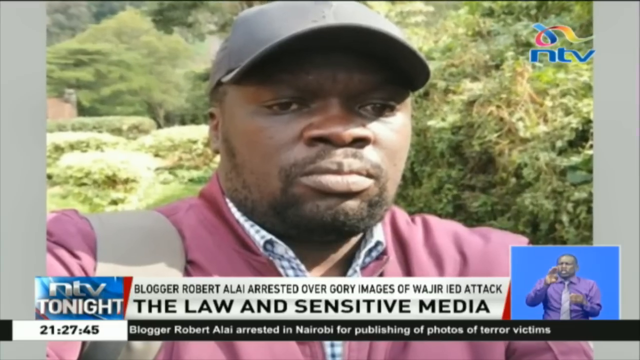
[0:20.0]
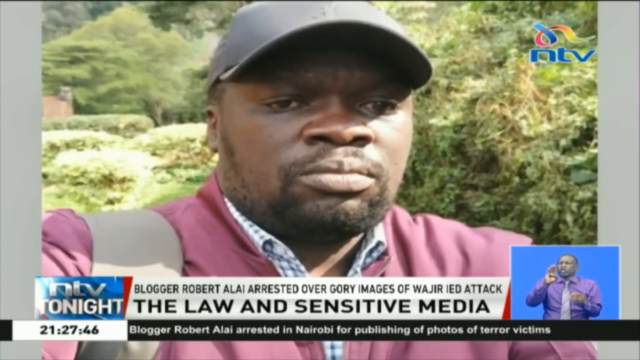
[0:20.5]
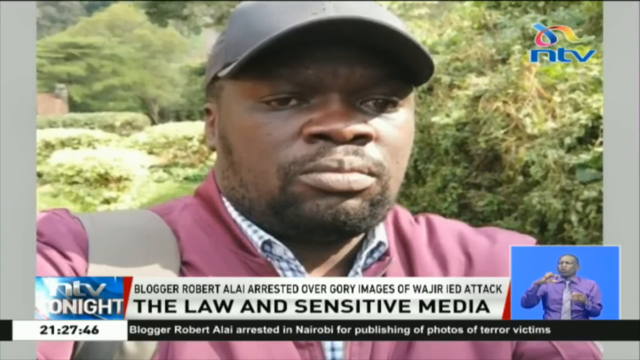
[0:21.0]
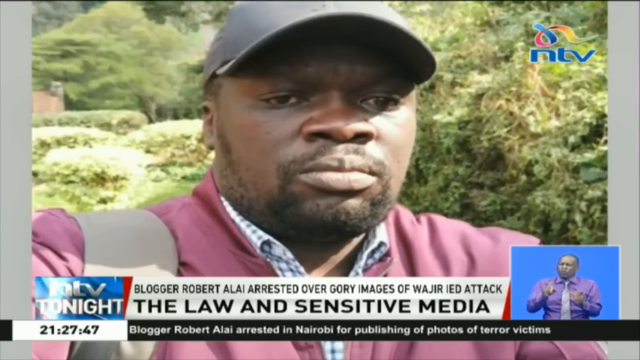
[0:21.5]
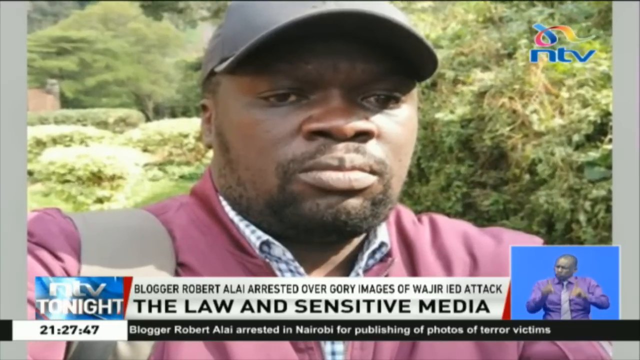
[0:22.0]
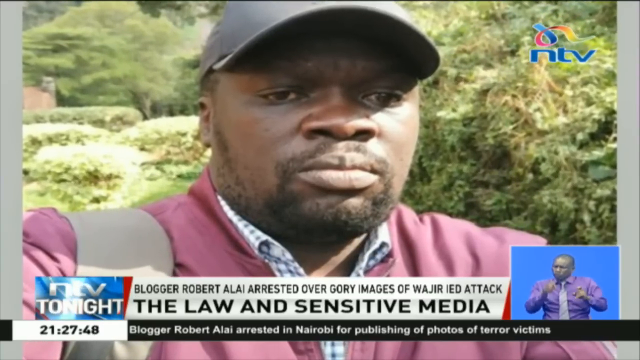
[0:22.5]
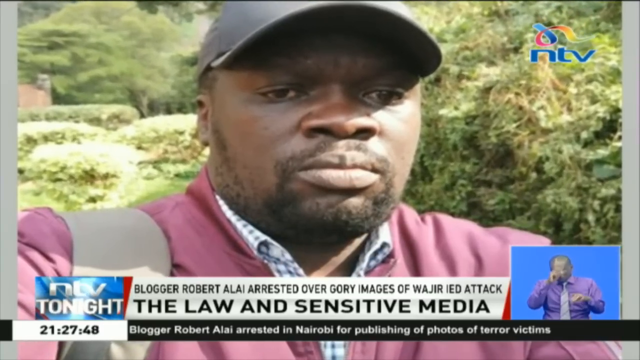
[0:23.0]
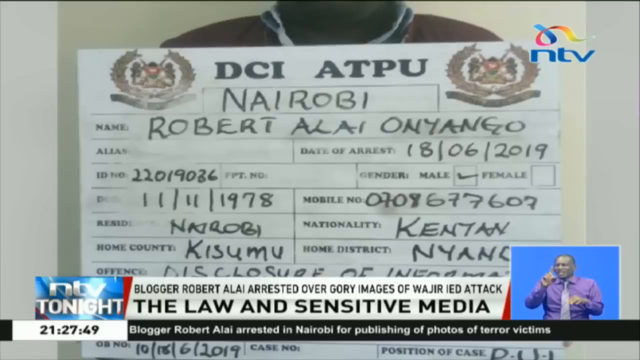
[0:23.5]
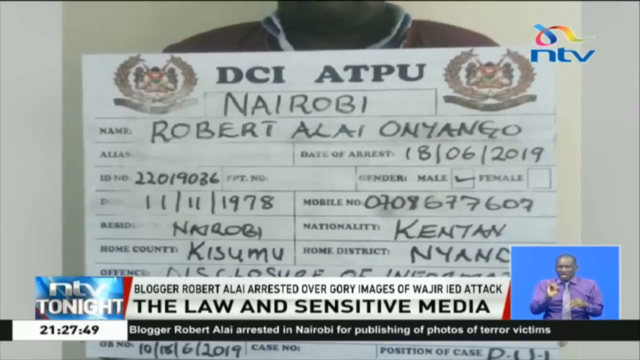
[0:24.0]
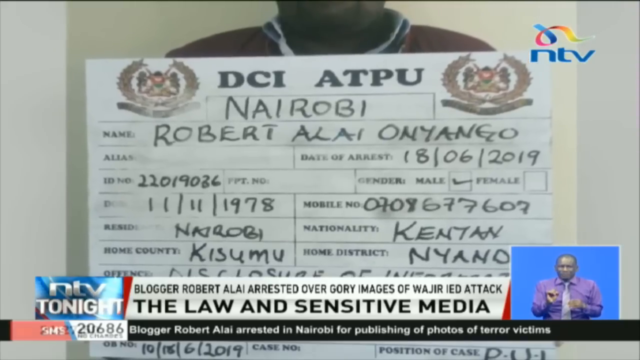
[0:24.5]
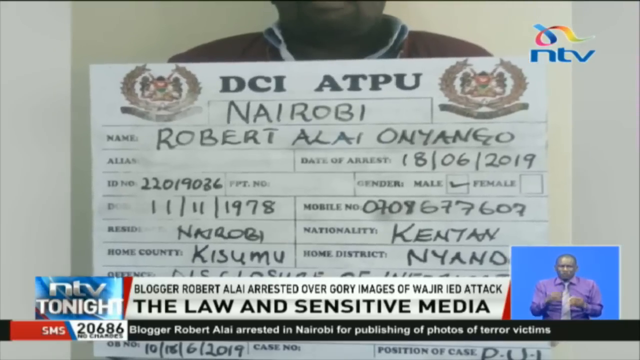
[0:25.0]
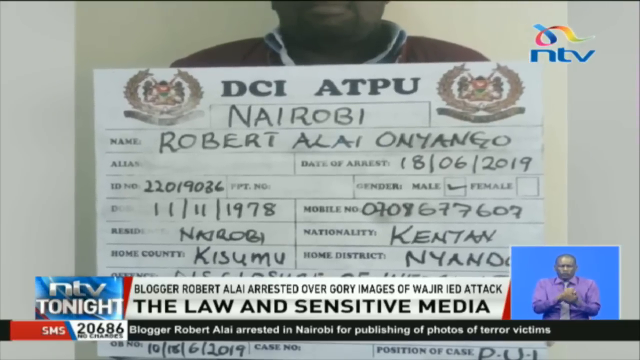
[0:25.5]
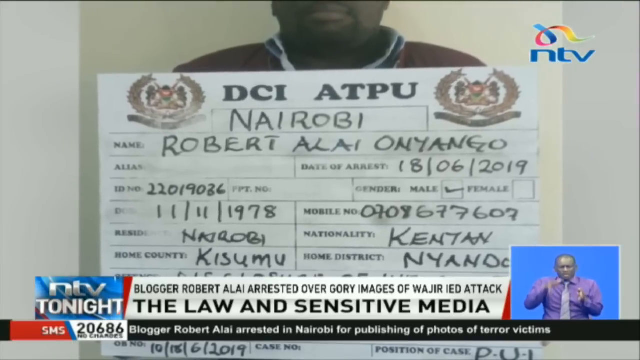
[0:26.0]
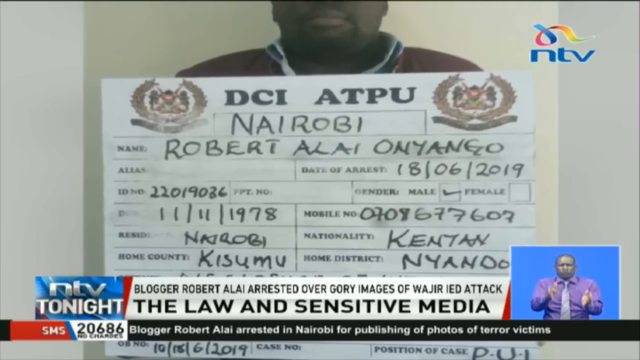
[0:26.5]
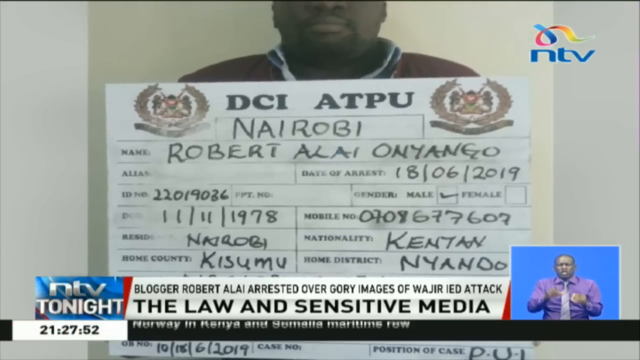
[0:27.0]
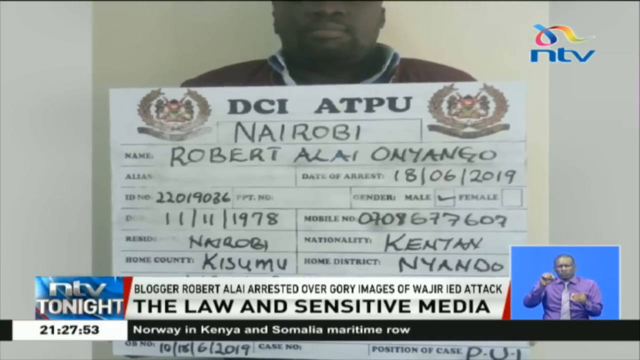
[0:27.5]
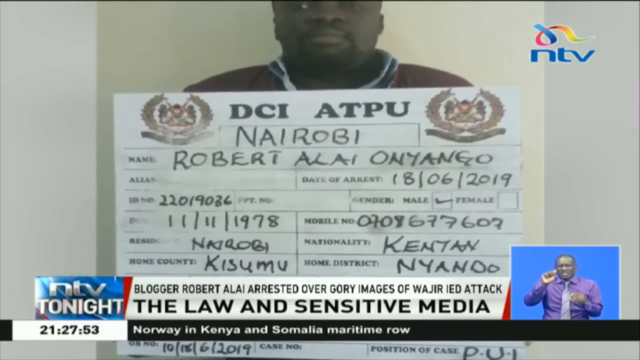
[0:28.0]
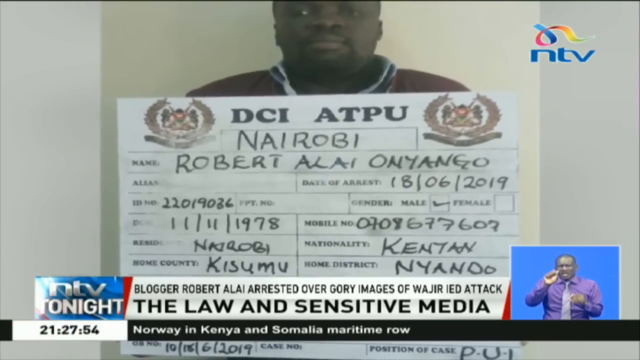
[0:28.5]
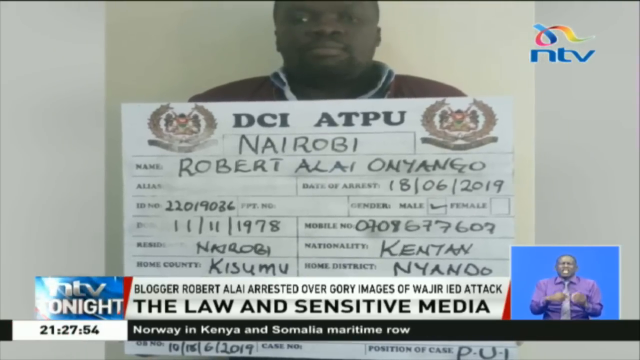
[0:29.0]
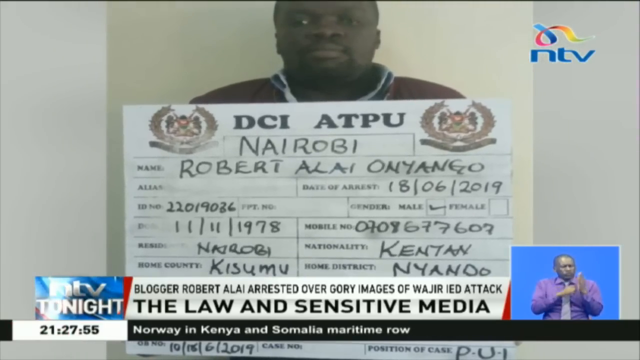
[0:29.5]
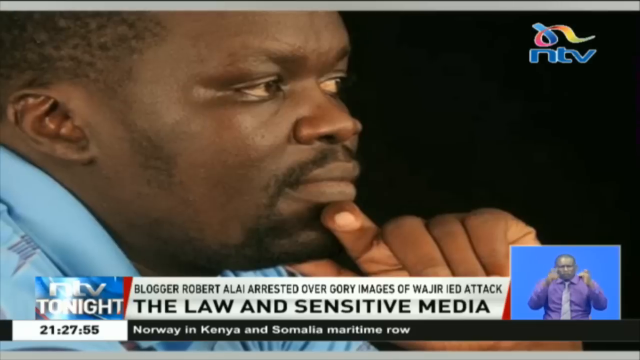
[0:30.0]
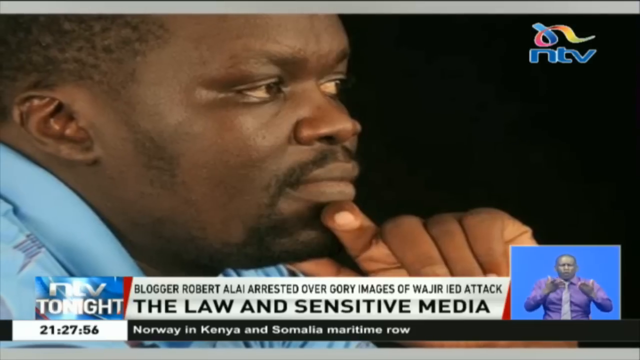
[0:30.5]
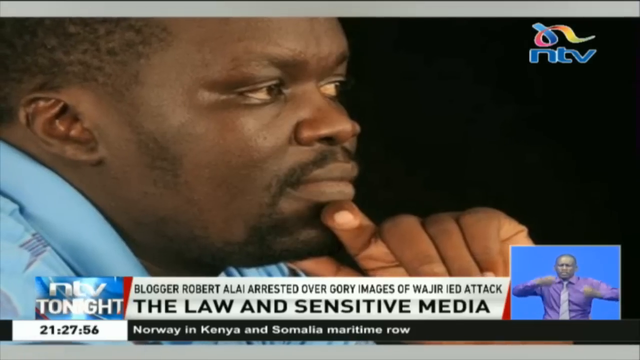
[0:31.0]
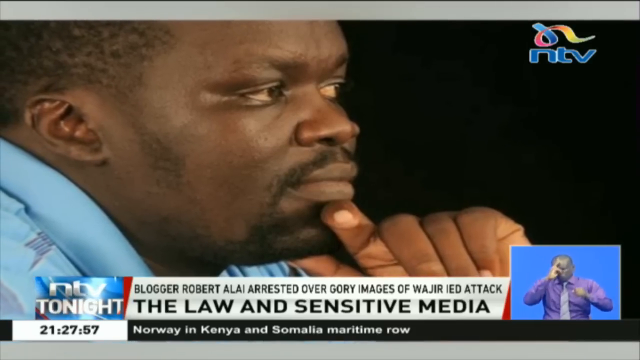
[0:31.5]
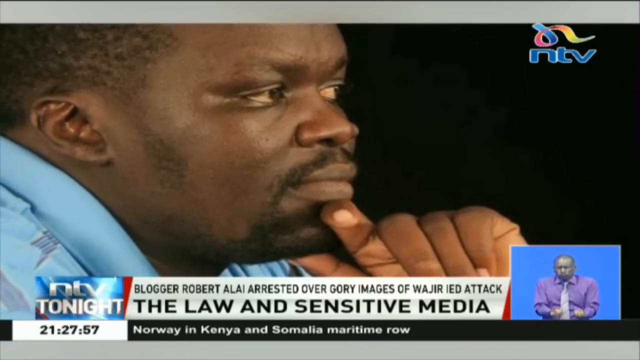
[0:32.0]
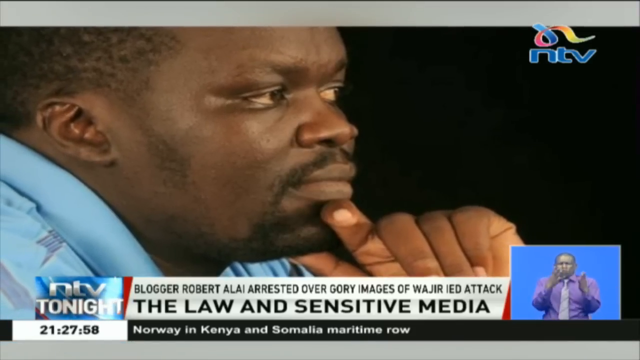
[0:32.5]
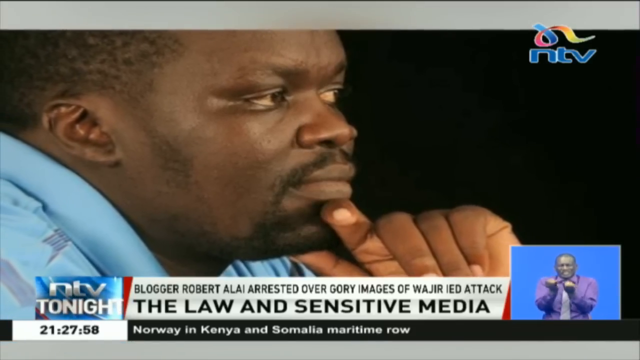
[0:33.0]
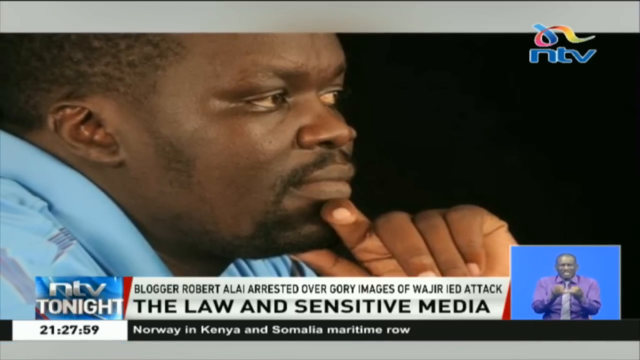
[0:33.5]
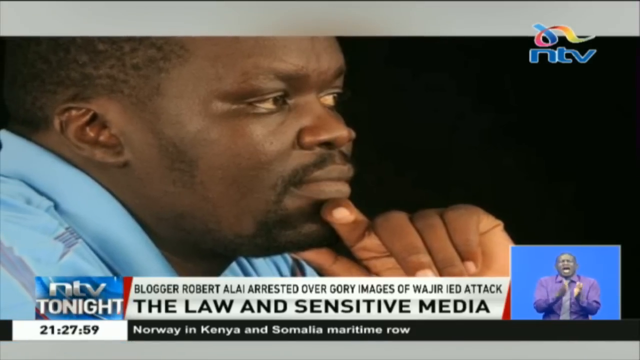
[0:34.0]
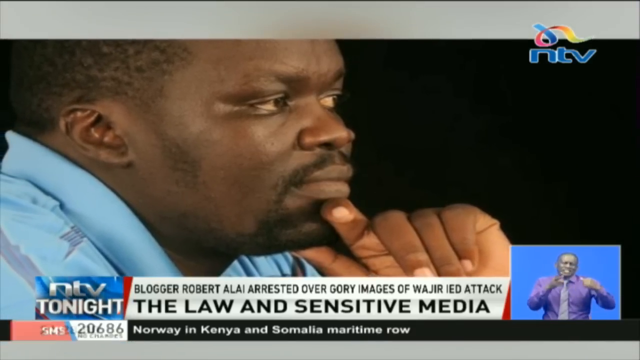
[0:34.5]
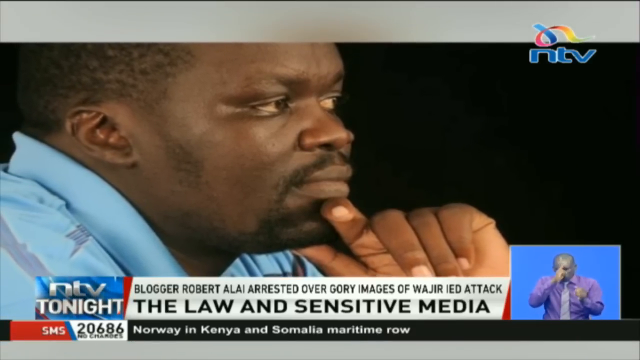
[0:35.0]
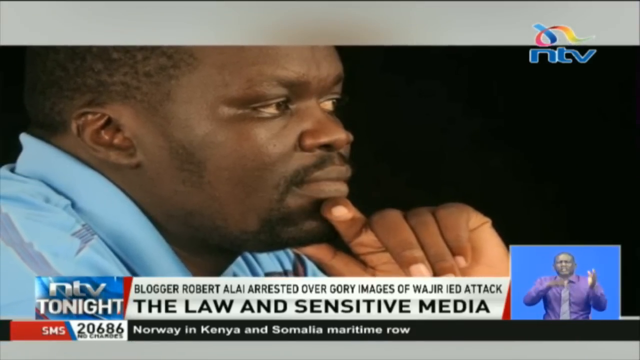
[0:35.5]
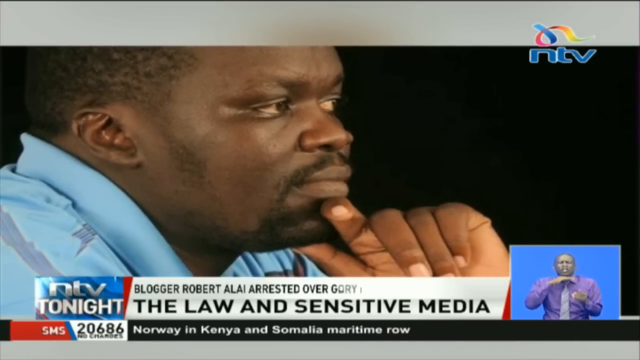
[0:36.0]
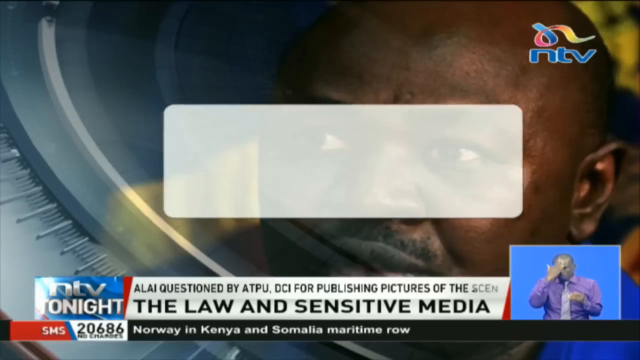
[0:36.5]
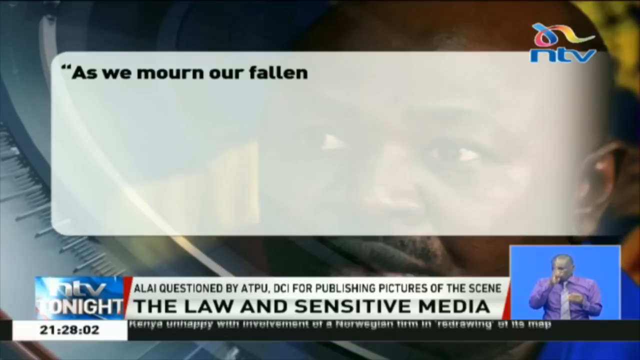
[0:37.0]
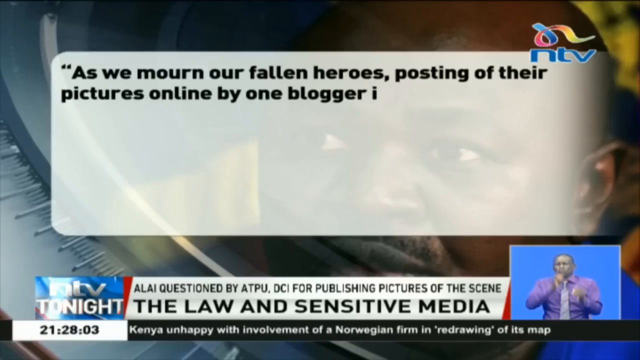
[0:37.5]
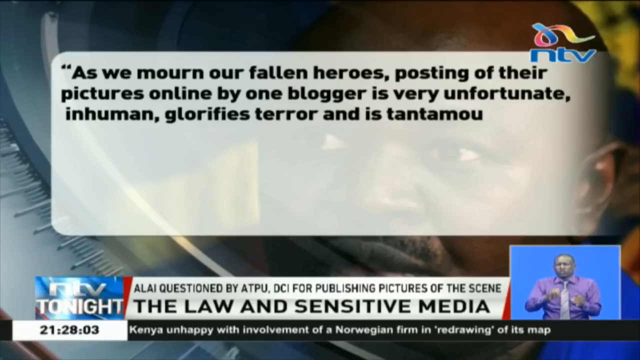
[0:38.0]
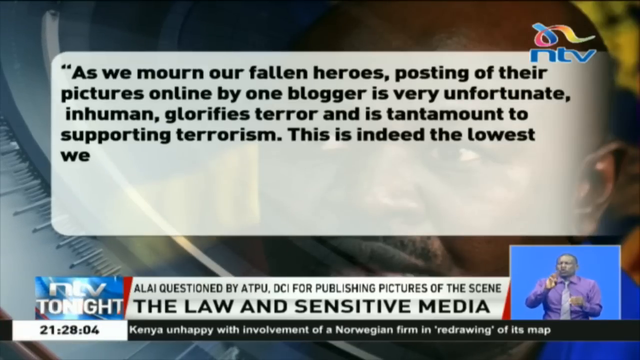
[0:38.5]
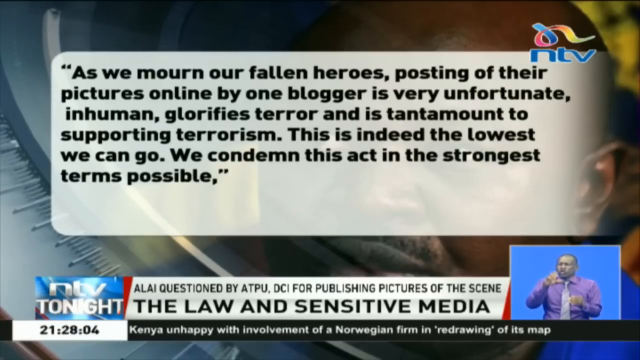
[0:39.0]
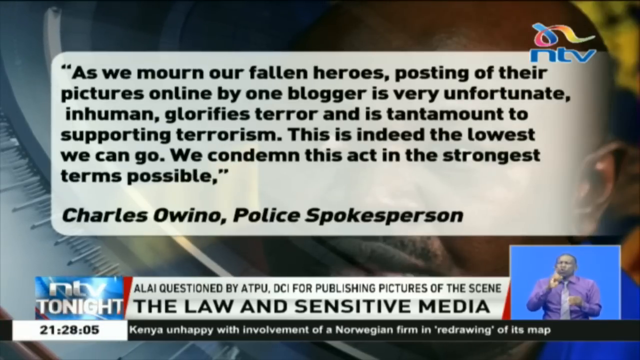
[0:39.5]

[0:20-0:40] A man in a maroon shirt and a gray hat takes a selfie. He appears to be standing out in a remote area, with bushes and trees growing behind him. At the bottom of the screen, text reads "blogger Robert Alai arrested over gory images of Wajir IED attack," and below that "the law and sensitive media." The ticker at the bottom reads "blogger Robert Alai arrested in Nairobi for publishing of photos of terror victims." In the lower right corner, a man uses sign language to translate what is being said. A mugshot of the man follows: he stands behind a large poster board reading "Nairobi, Robert Alai, Ani Aingo," with further information underneath. He is then shown in profile, apparently sitting on a stage, with his hand under his chin and wearing a blue shirt. Next, text from the police spokesman appears on screen: "as we mourn our fallen heroes, posting of their pictures online by one blogger is very unfortunate. Inhuman, it glorifies terror, and it is tantamount to supporting terrorism. This is indeed the lowest we can go. We condemn this act in the strongest terms possible. Charles Owino, police spokesperson."